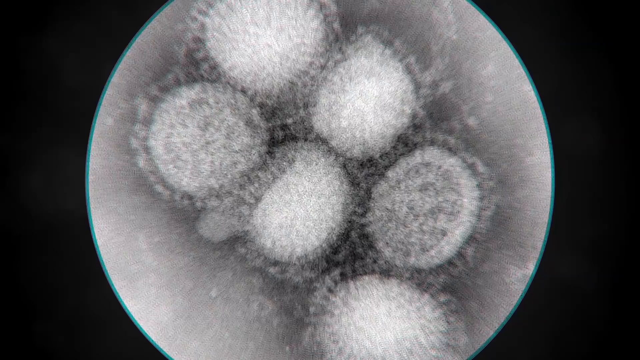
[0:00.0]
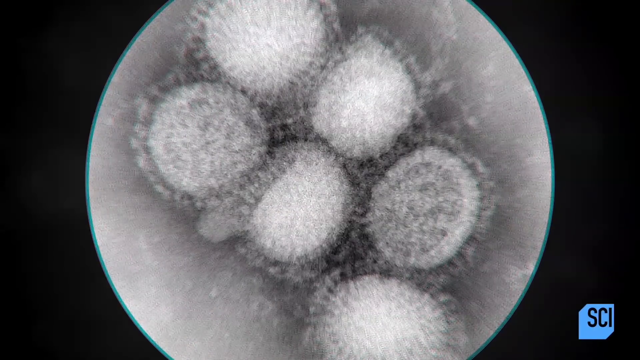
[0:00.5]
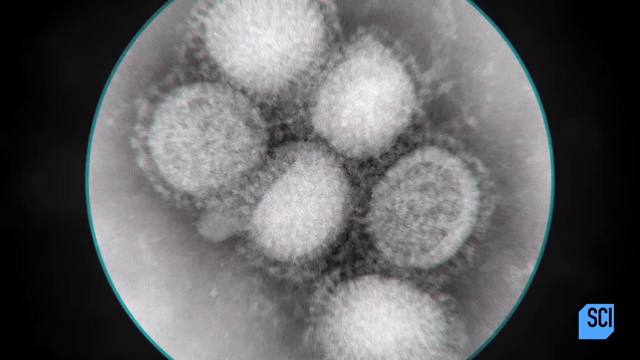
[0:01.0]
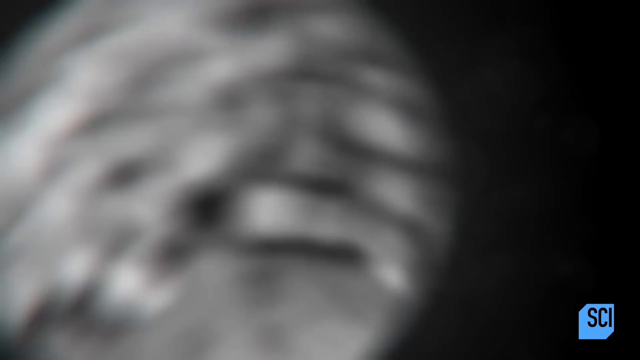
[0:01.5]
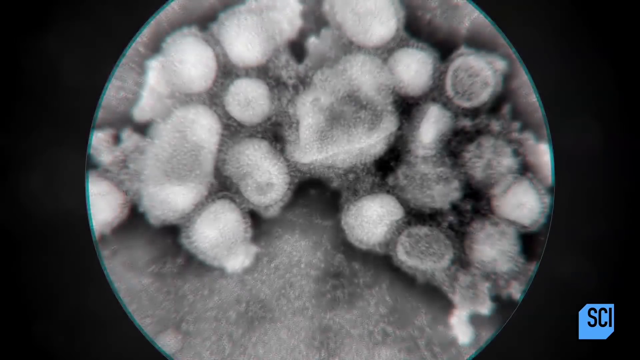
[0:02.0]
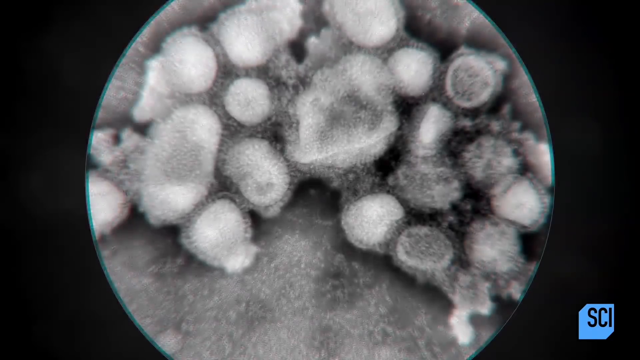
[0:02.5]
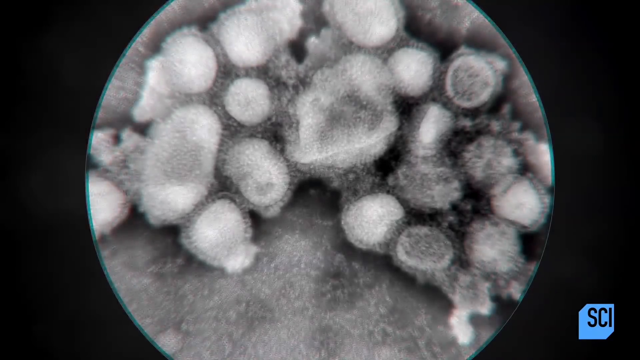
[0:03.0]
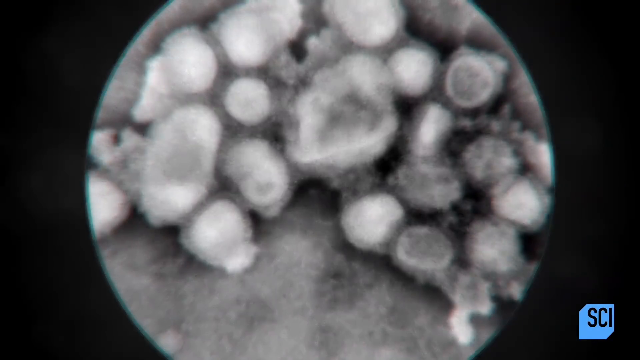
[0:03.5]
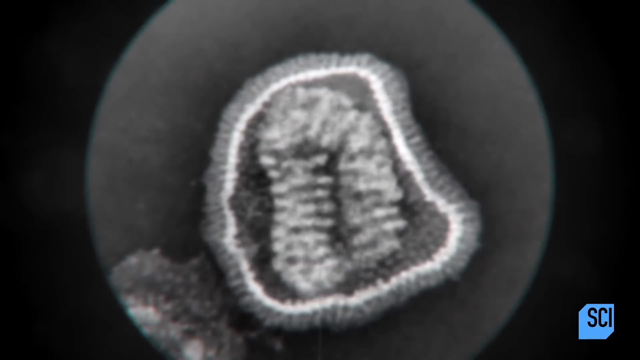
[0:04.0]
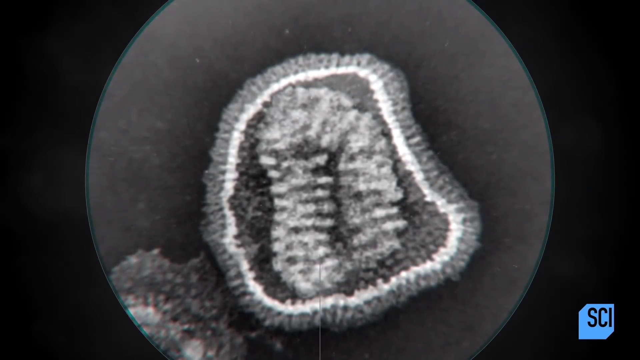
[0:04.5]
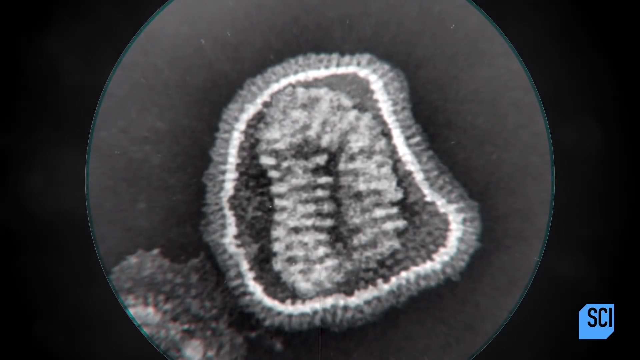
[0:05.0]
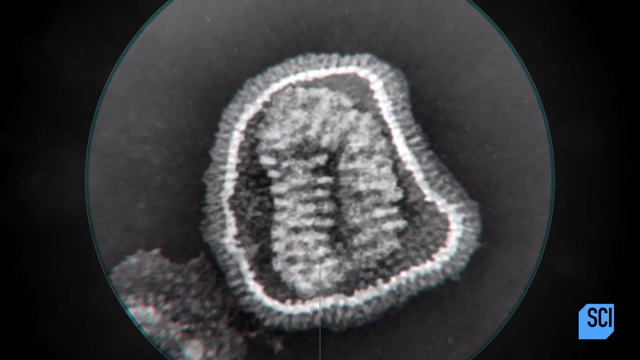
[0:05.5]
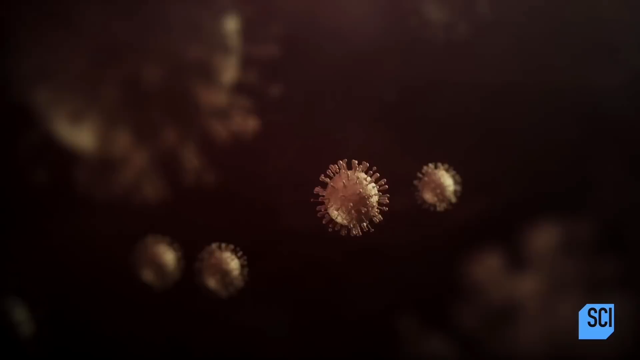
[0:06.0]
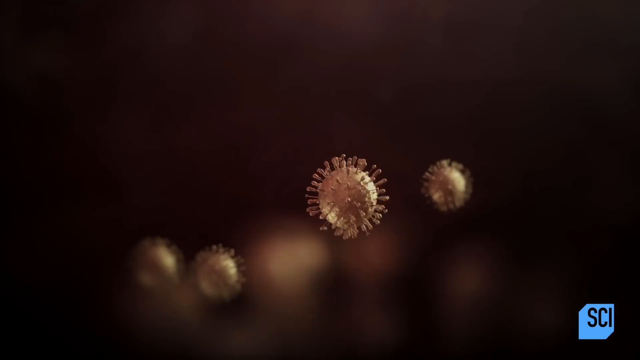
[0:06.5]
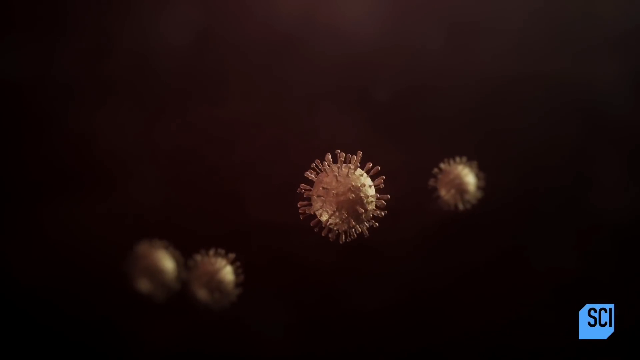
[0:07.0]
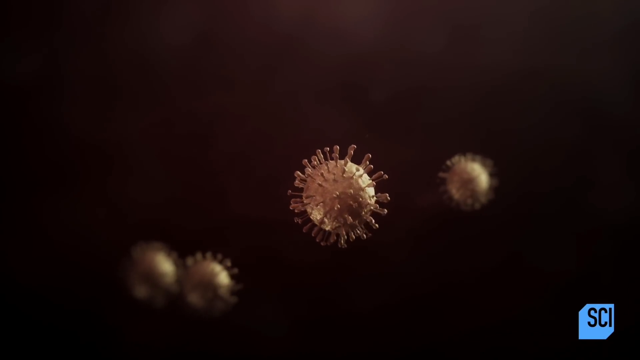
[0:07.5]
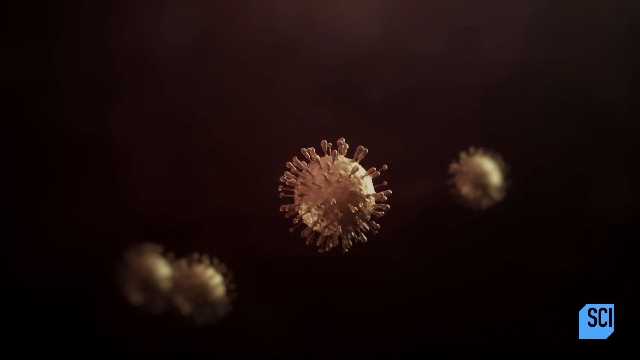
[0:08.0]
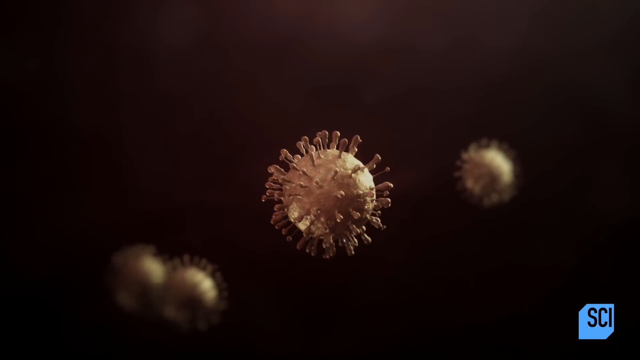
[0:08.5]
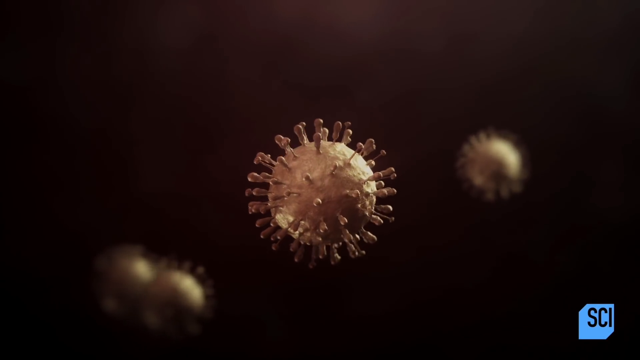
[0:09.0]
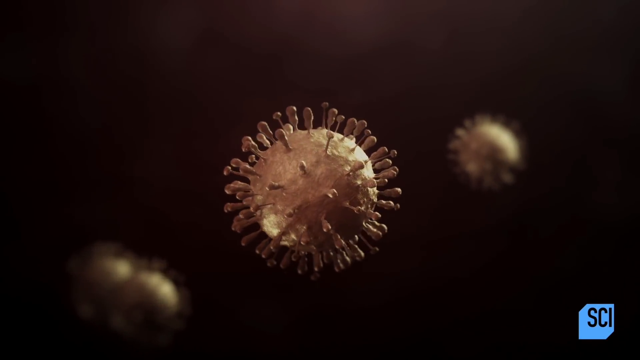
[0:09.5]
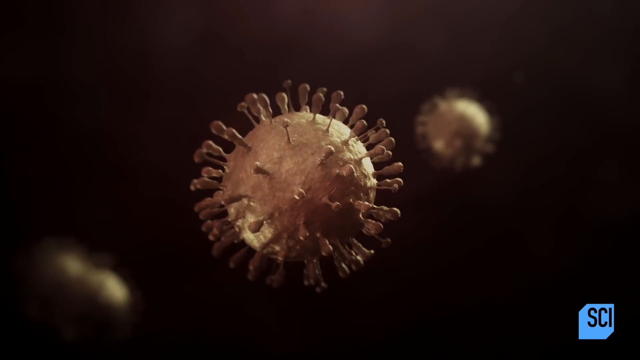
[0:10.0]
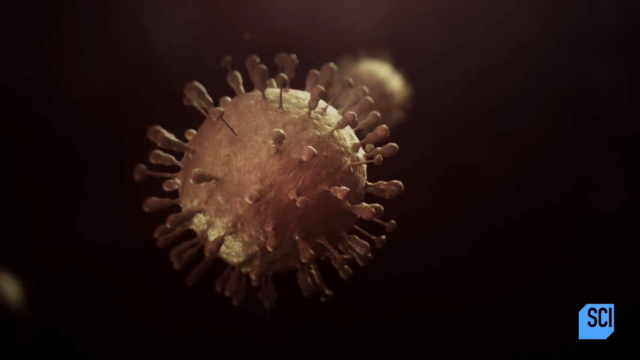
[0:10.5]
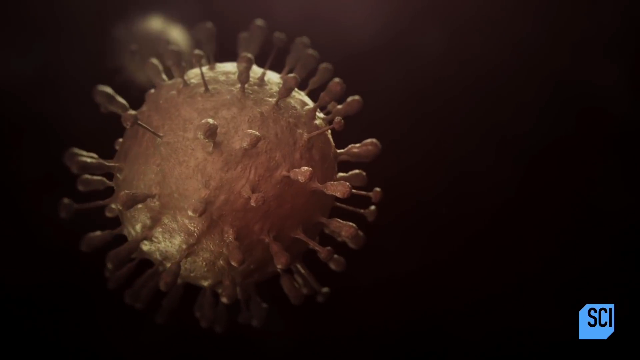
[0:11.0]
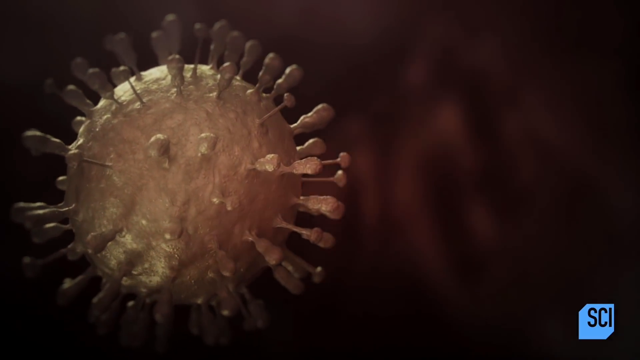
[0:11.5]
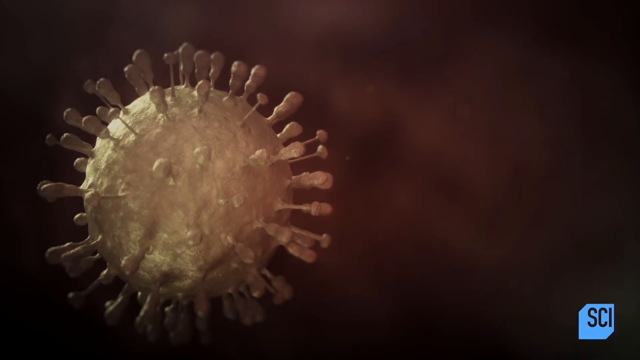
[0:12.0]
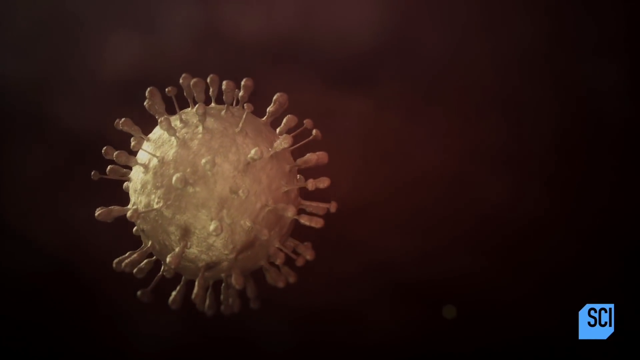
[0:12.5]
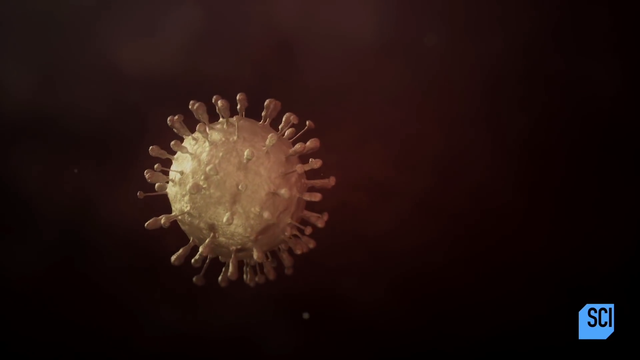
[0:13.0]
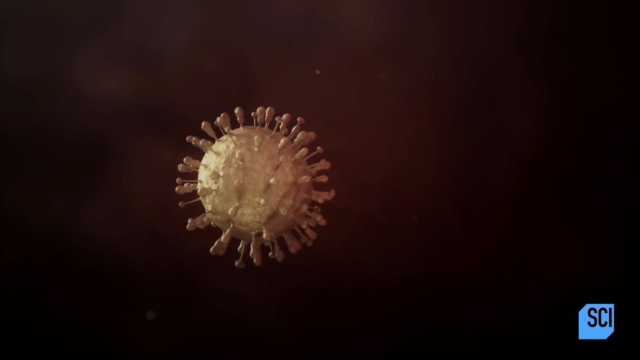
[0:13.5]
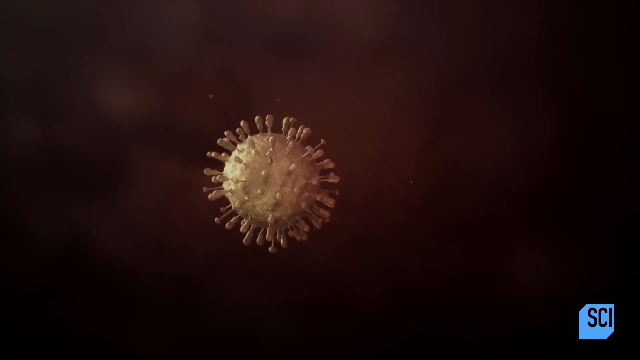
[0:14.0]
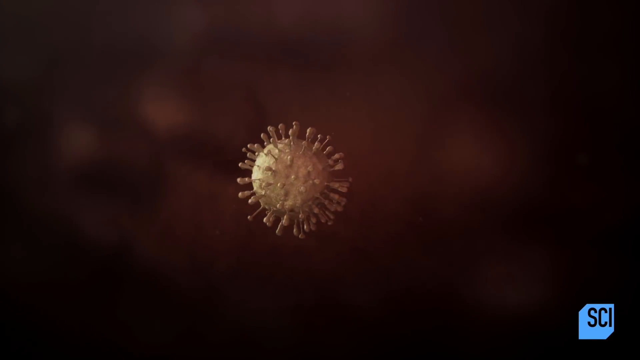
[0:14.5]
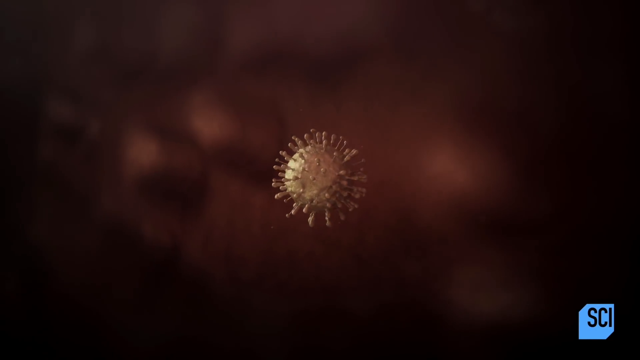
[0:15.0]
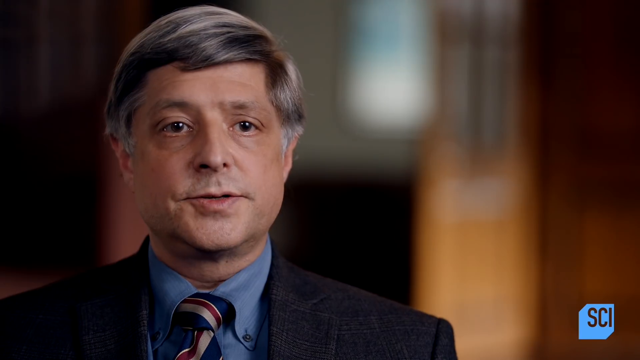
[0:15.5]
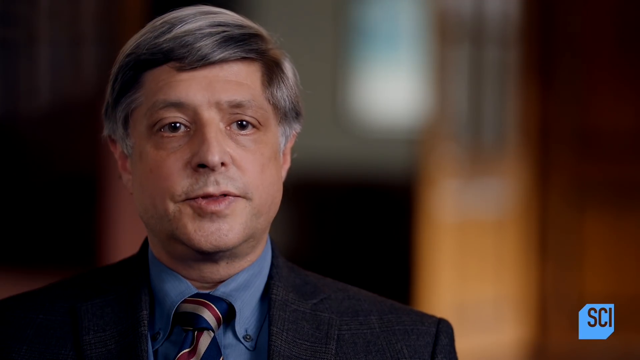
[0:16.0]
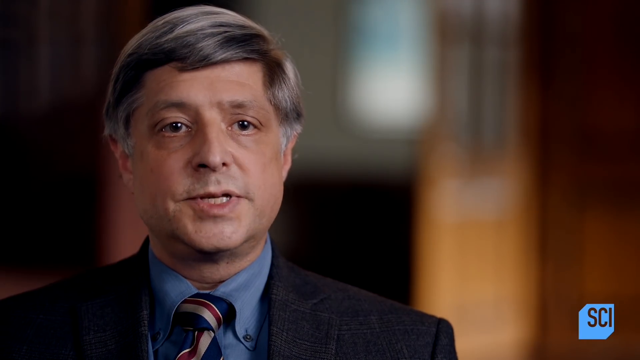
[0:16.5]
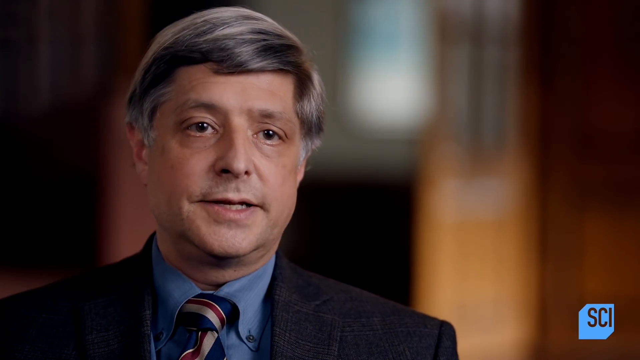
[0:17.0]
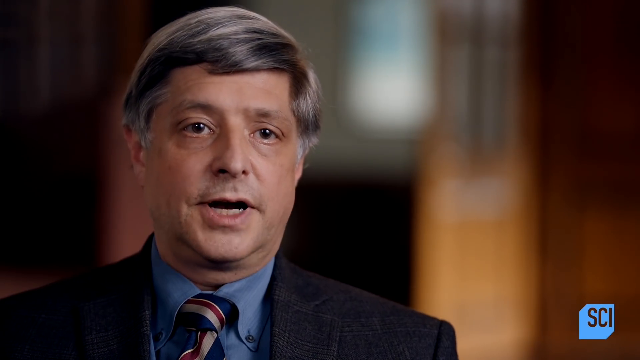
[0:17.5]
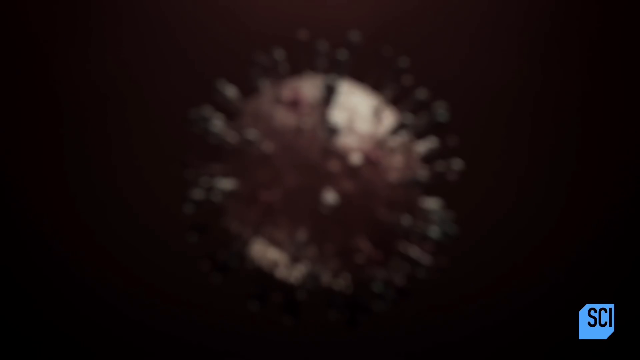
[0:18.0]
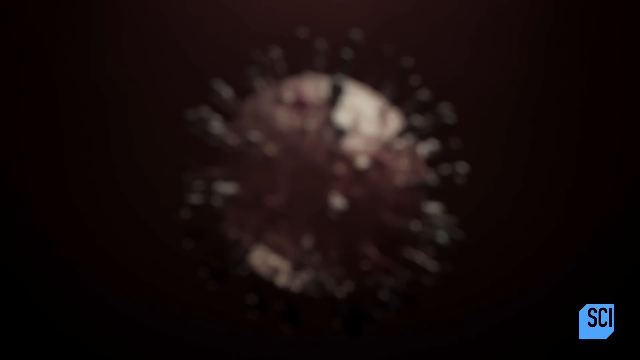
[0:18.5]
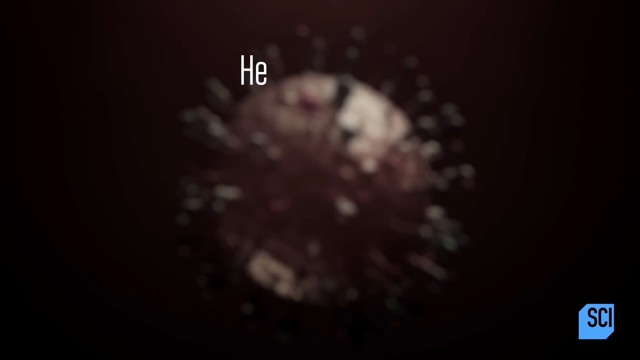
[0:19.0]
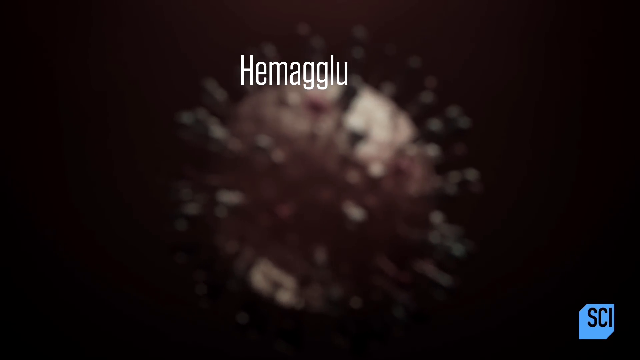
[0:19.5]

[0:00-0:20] The video opens with what looks like a microscopic slide showing a cross section of something against a black background. In the center is a large gray circle containing six smaller circles, which are light colored in the center and appear solid. Each of the smaller circles has what looks like filaments or thick hairs coming off it. The image slides to the right and a new image pops up, another microscopic view: a round circle against a black background, gray inside, containing numerous shapes that are irregular in size and mostly circular or vaguely circular. These shapes all have the same filaments or hairs extending from around them in darker gray, and their insides are white with shadings of lighter gray. The image moves to the right again, revealing a dark gray circle against a black background that takes up most of the screen. Within it is an irregular shape halfway between a circle and a square, its outside highlighted in thick, dark gray threads. Inside that is a white border, and inside the white border is another gray background that looks bumpy. On the left-hand side it is darker gray, and within that is an upside-down U-shaped image of an object that is light gray with darker gray highlights. The image then switches to four circular gold balls with spikes floating through space; they move down a golden pathway. Next, a man with gray hair, a blue shirt and a tie talks to the camera. Then the word "hemagglutinin" appears.